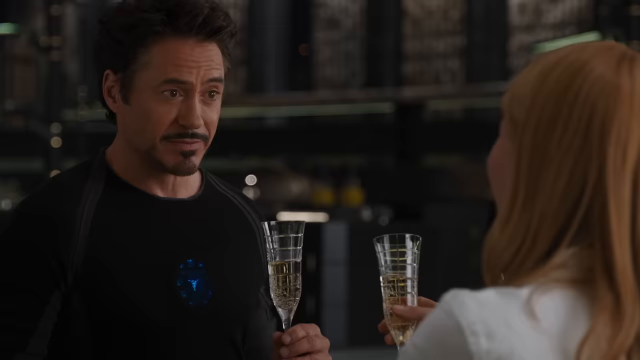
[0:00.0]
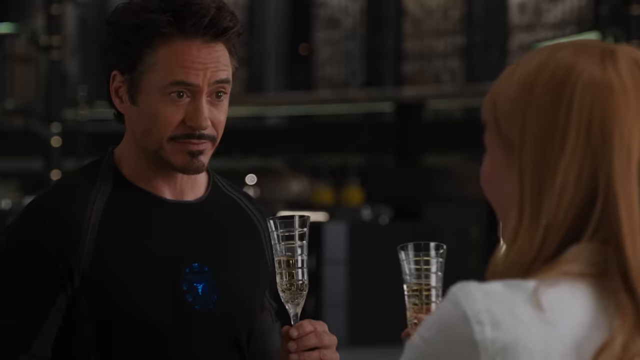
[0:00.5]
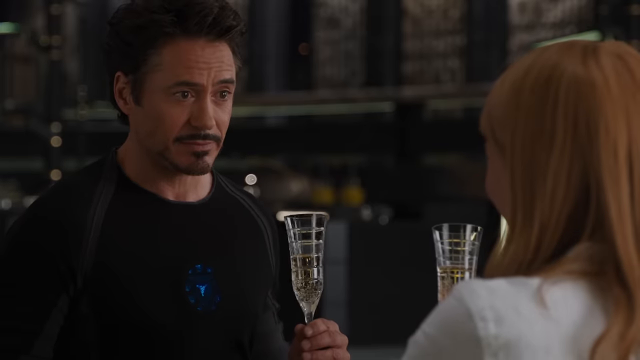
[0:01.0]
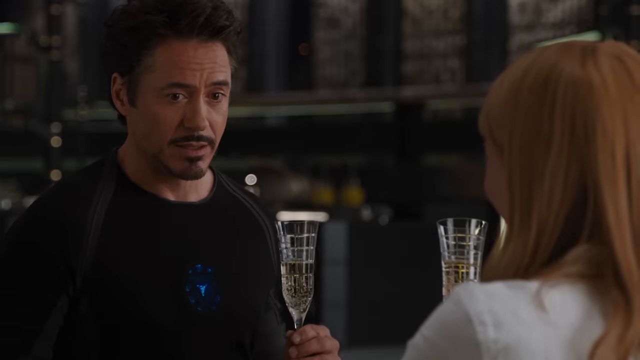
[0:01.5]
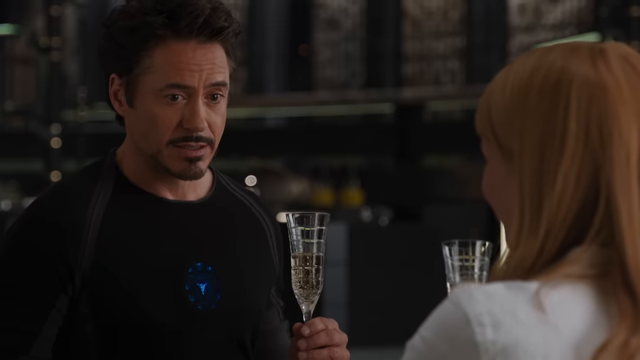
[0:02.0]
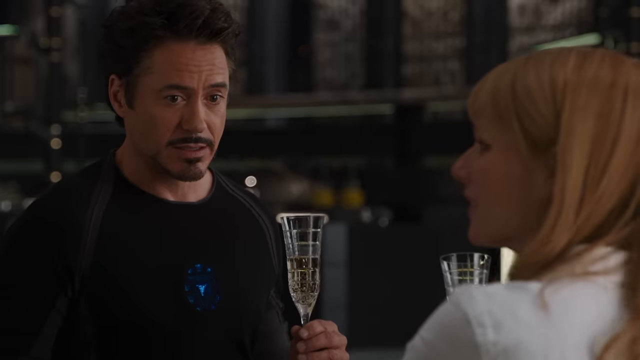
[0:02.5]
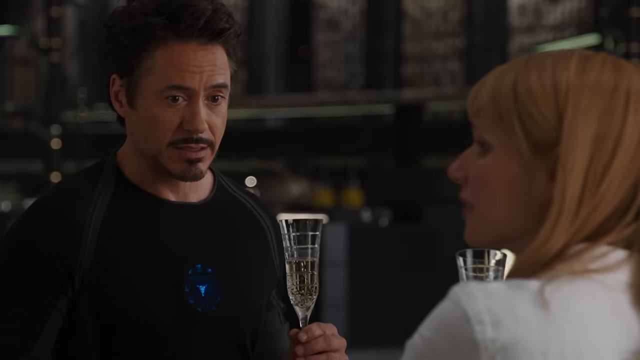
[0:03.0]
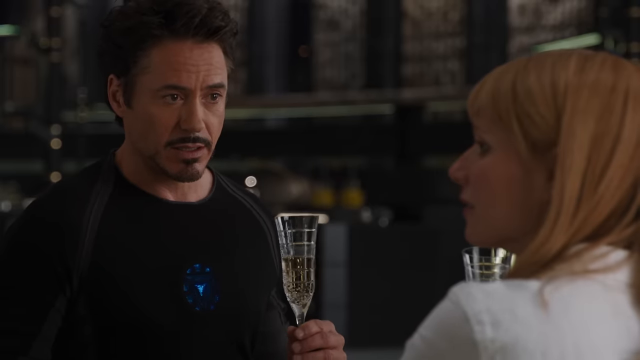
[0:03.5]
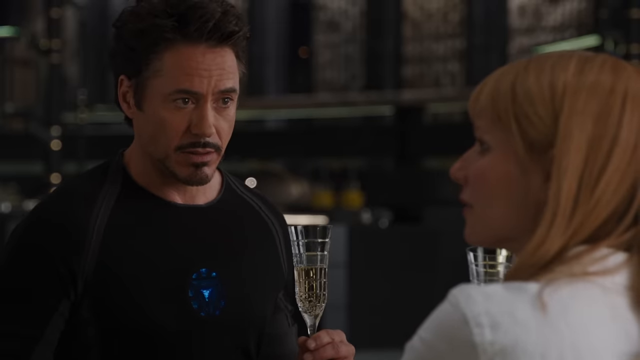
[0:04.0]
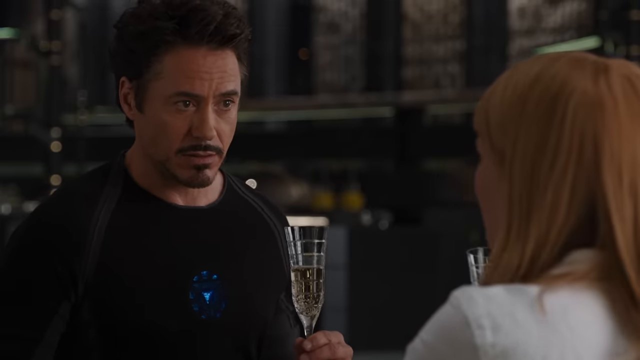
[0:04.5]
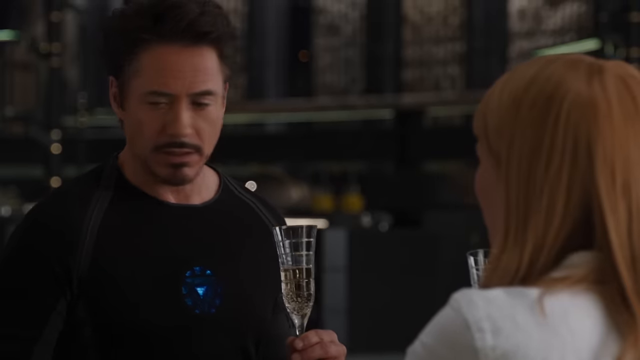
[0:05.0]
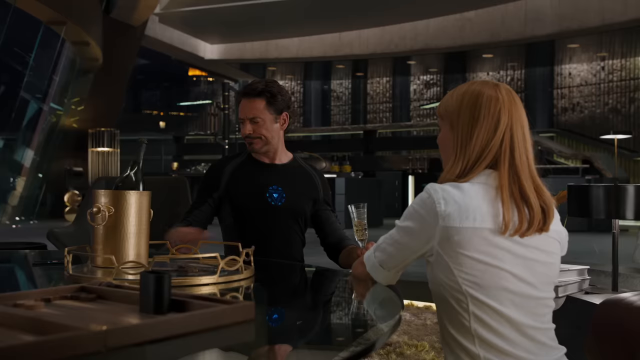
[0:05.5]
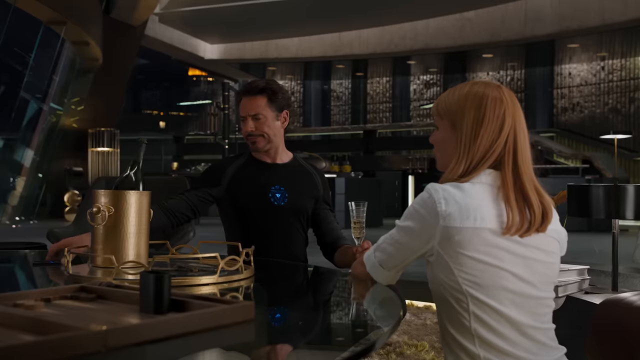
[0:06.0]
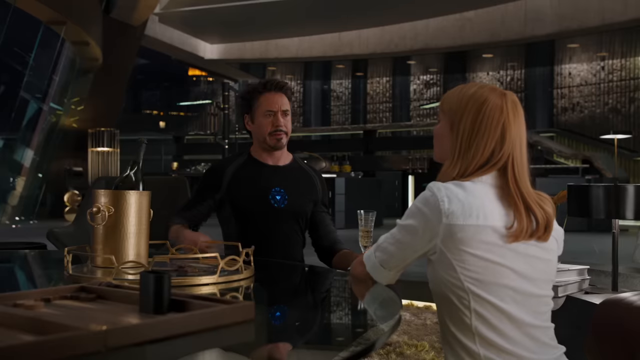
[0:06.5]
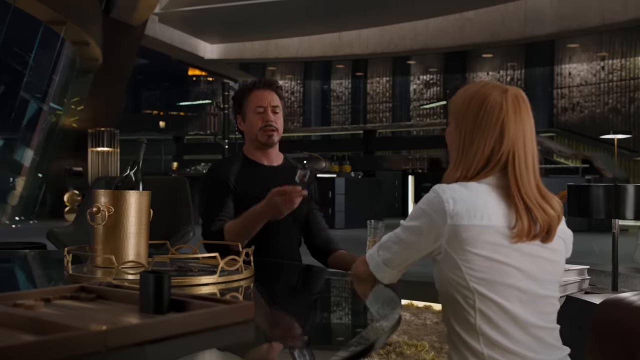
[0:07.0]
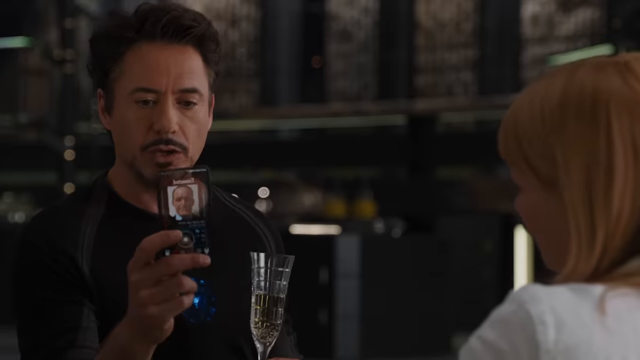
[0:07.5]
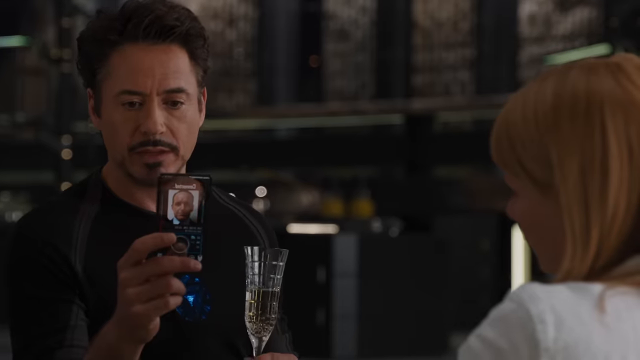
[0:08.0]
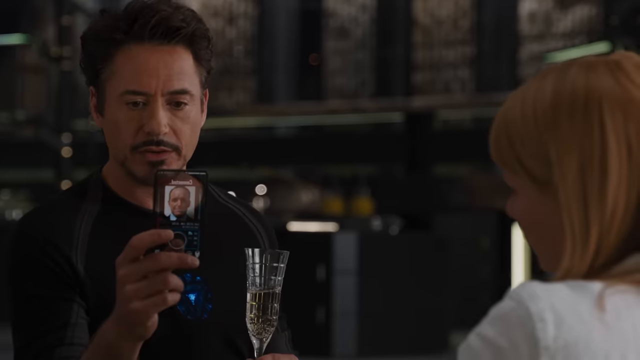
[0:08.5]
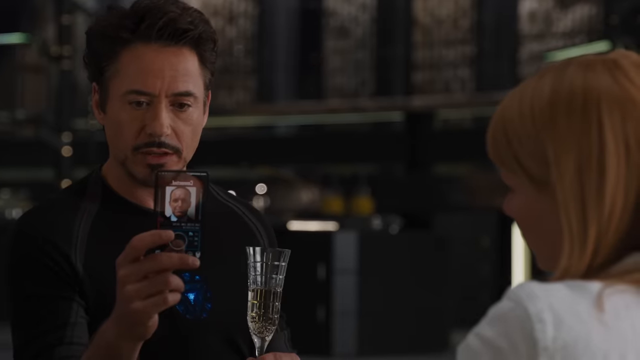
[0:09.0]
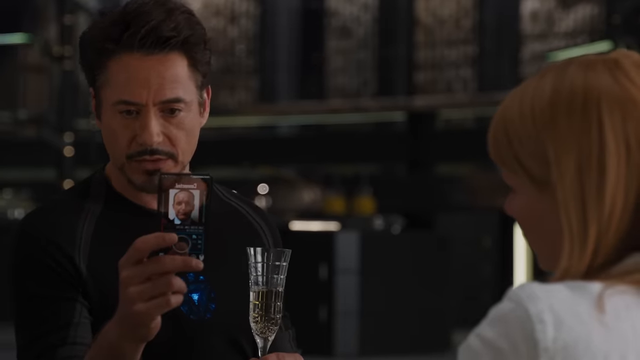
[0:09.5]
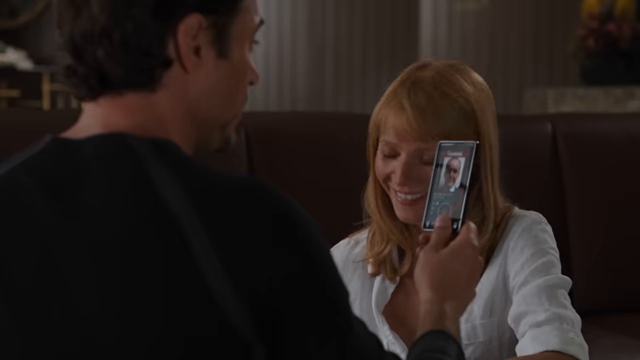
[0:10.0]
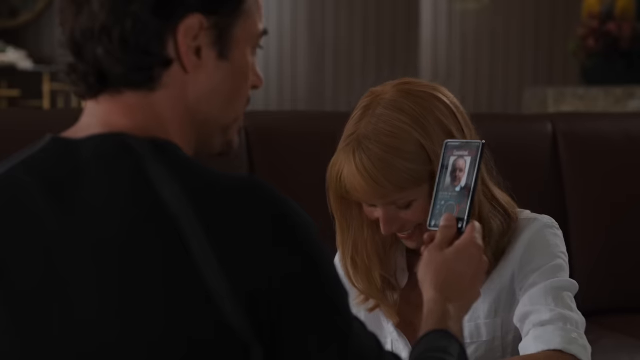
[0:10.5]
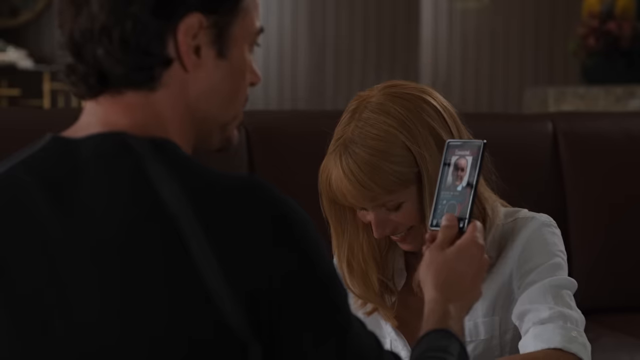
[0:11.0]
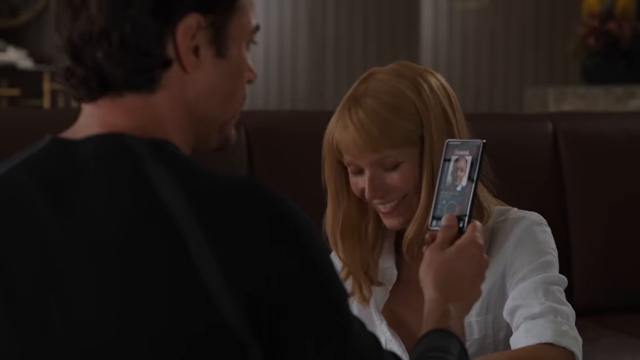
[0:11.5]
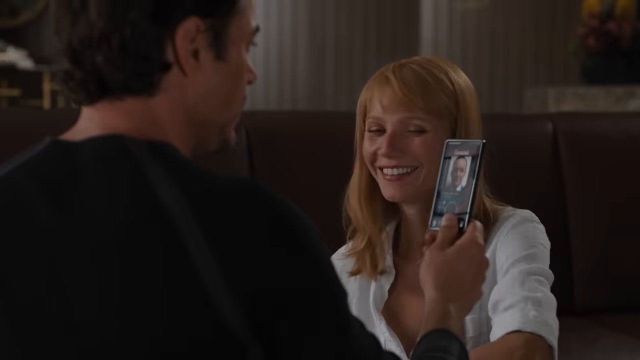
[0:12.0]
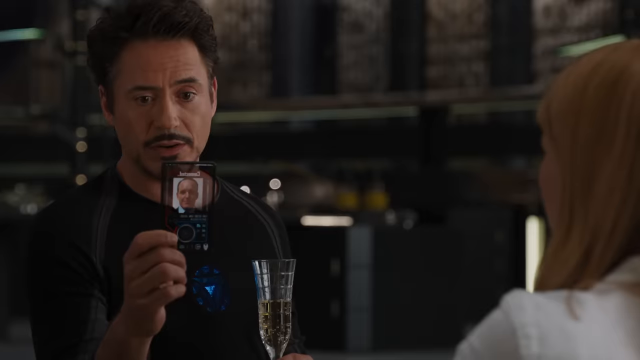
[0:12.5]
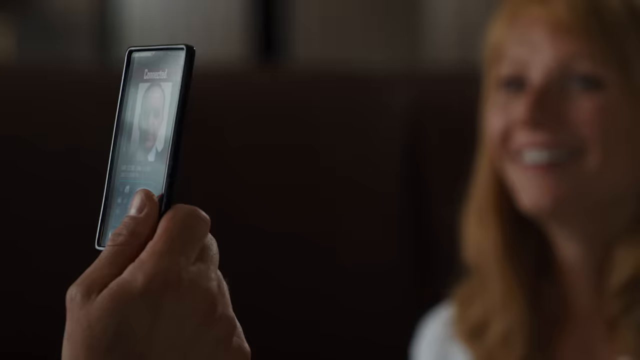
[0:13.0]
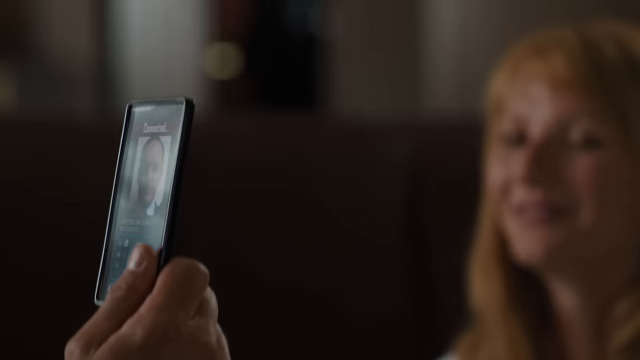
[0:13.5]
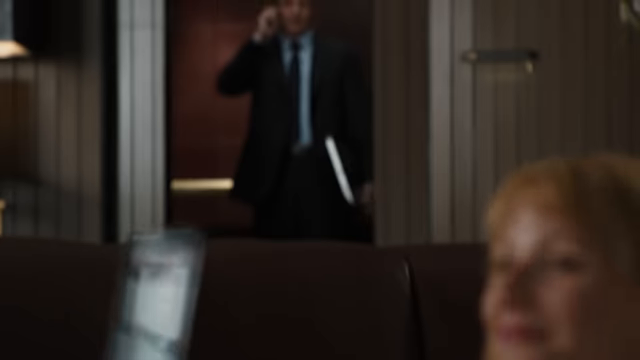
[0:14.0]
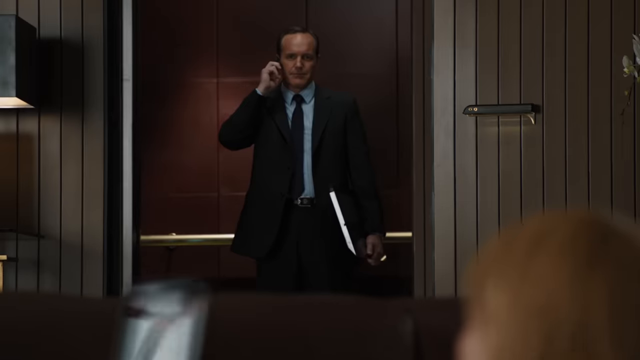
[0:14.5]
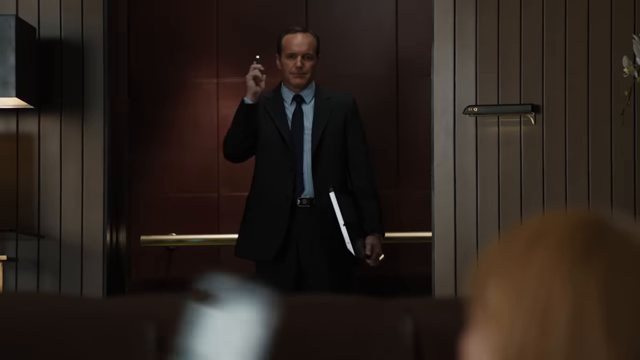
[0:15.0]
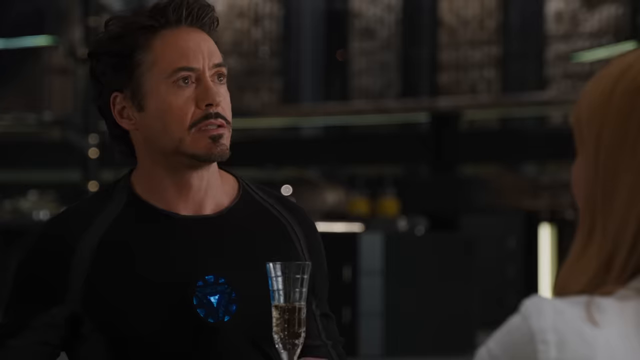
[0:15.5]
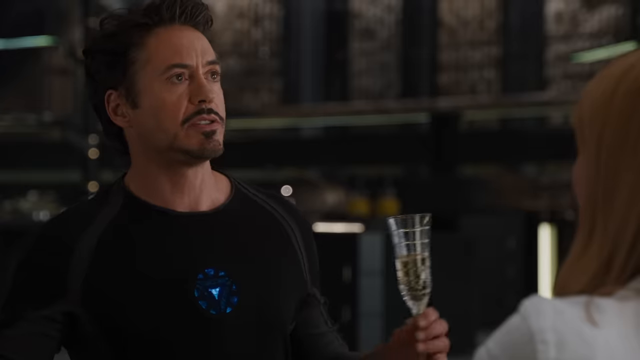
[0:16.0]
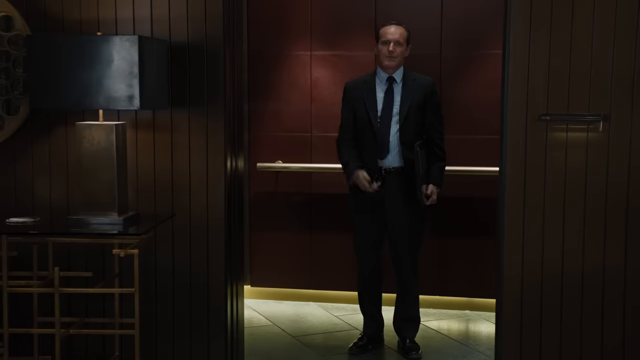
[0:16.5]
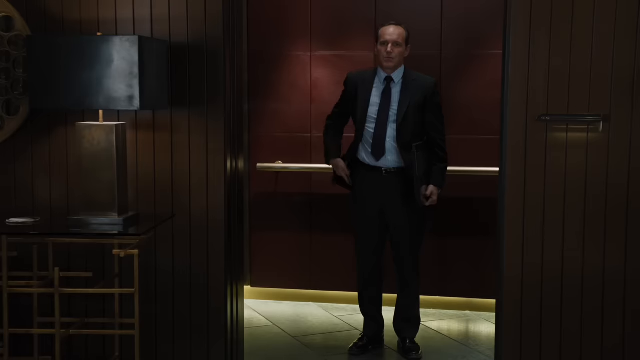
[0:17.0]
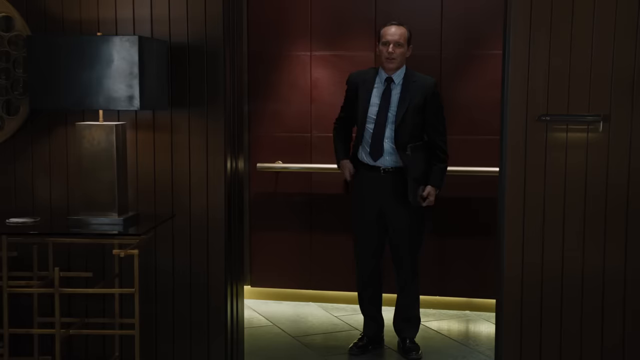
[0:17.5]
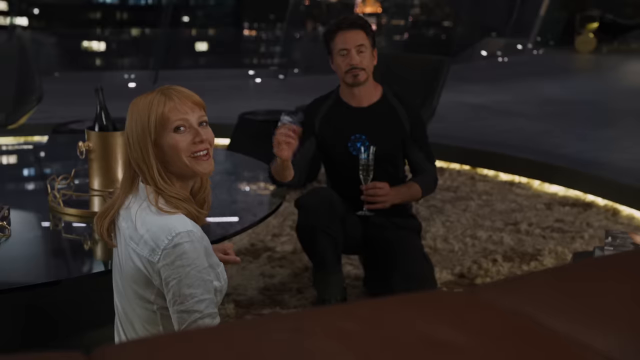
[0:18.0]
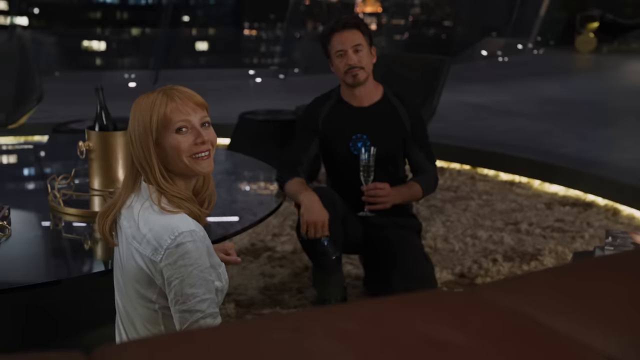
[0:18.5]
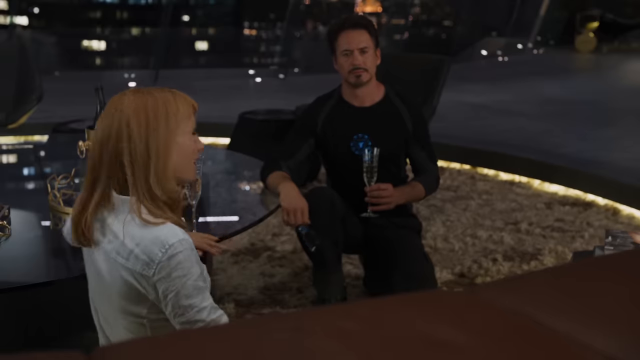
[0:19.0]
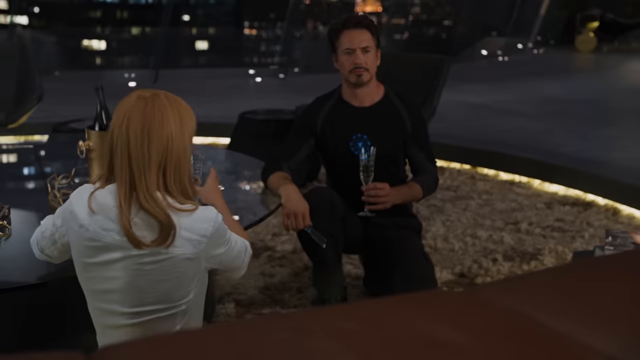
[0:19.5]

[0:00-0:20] The video is a movie. The actor on the left is Robert Downey Jr., who appears to be in his young 50s, with black hair, dark eyes, a mustache and a goatee. He wears a black long-sleeve shirt and holds a glass of either champagne or white wine. The lady to his left, on the viewer's right, has red hair and also holds a glass filled with the same liquid; she wears a white dress or top, which is hard to tell. A table is to Robert's right, with a gold ice container on it. The rest of his house is a very large two-story house. He pulls out a cell phone and speaks with somebody he can see on it, a smiling woman with blonde, reddish hair. The person he is talking with then comes into the home through the elevator.